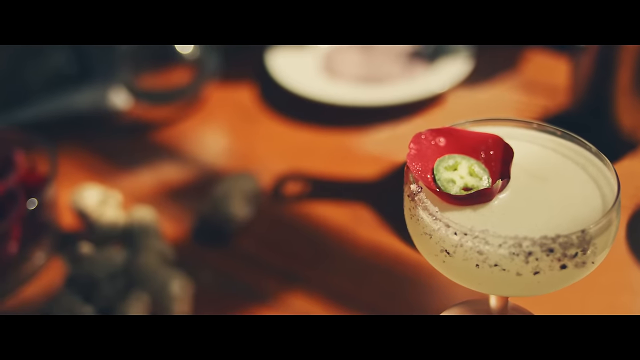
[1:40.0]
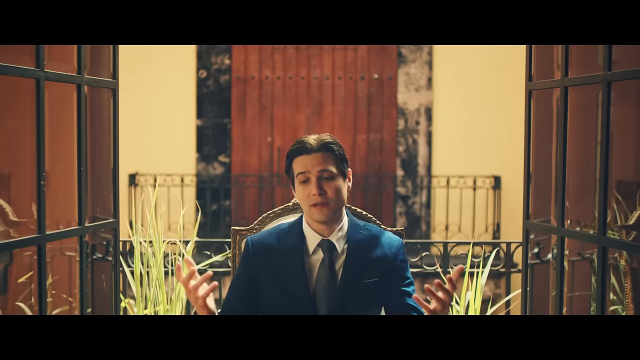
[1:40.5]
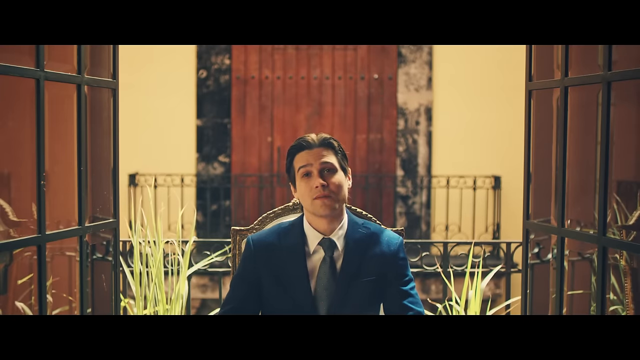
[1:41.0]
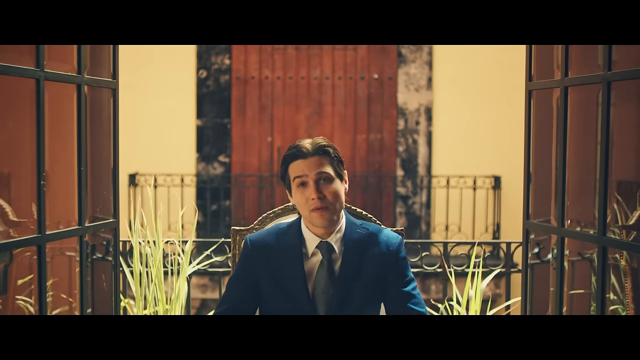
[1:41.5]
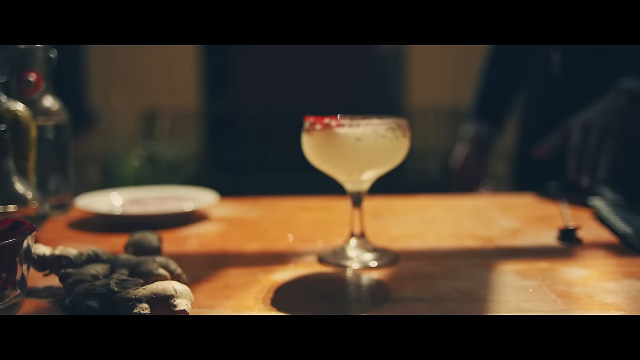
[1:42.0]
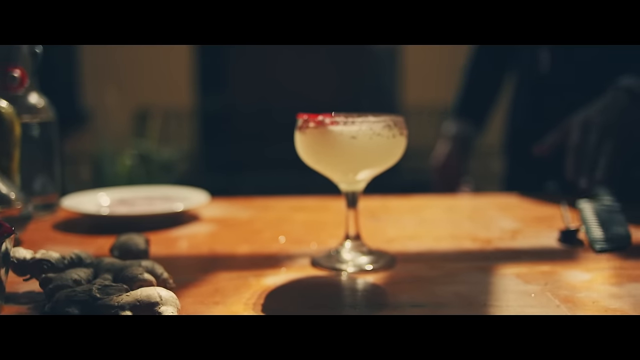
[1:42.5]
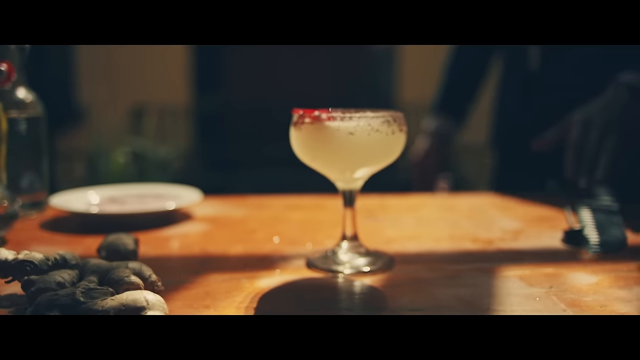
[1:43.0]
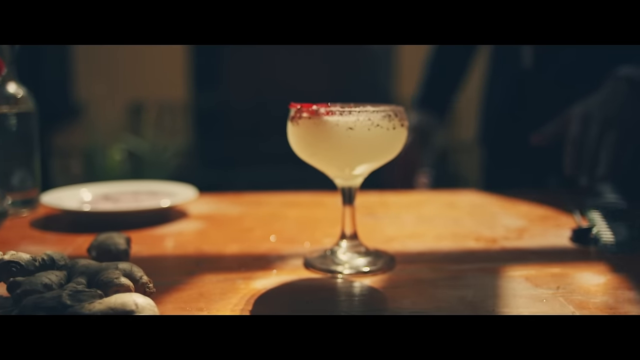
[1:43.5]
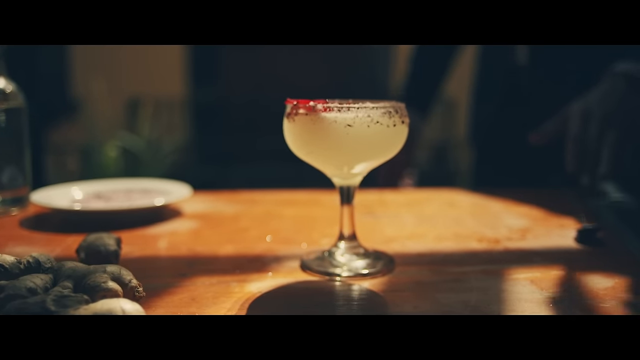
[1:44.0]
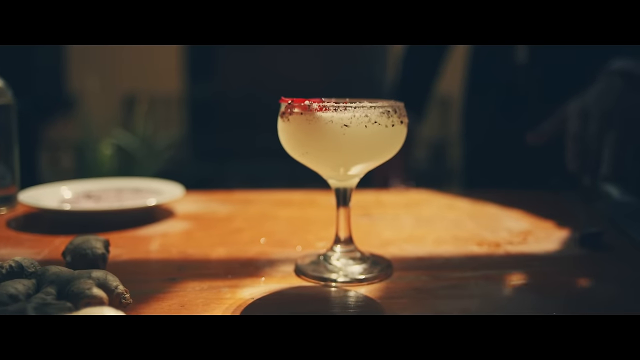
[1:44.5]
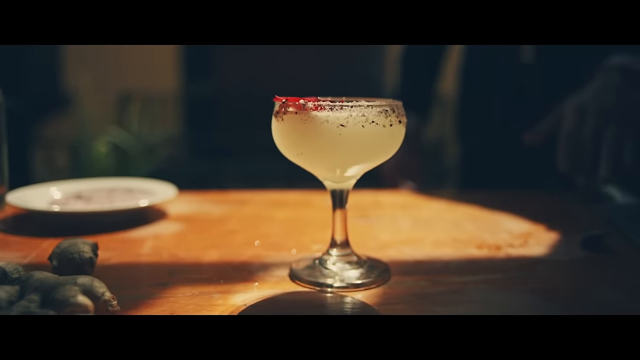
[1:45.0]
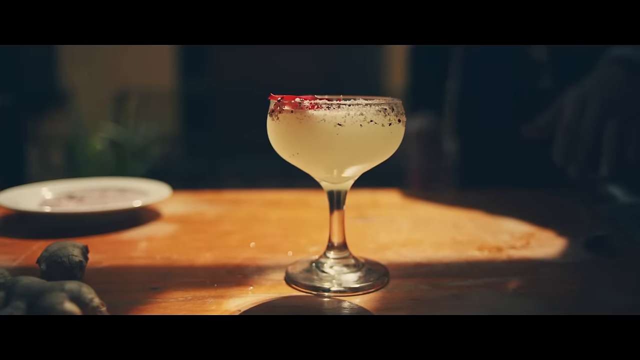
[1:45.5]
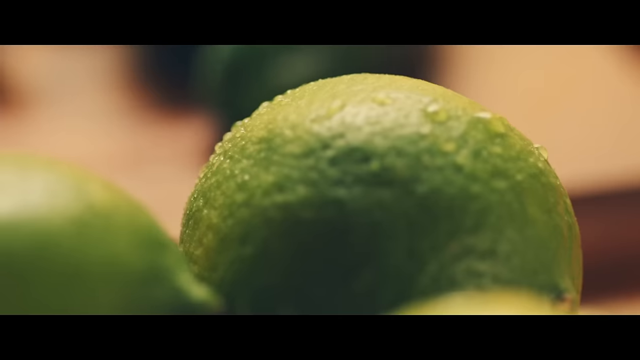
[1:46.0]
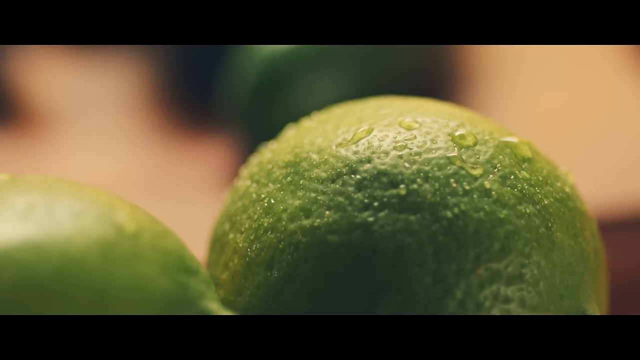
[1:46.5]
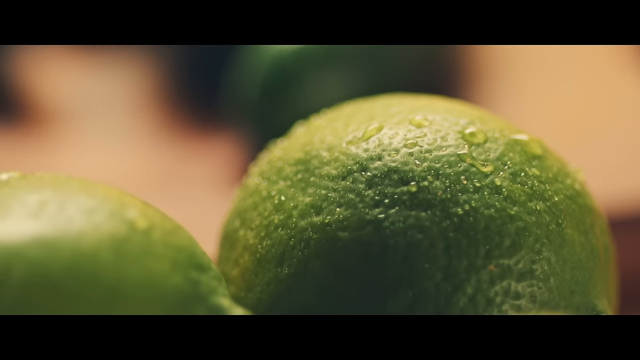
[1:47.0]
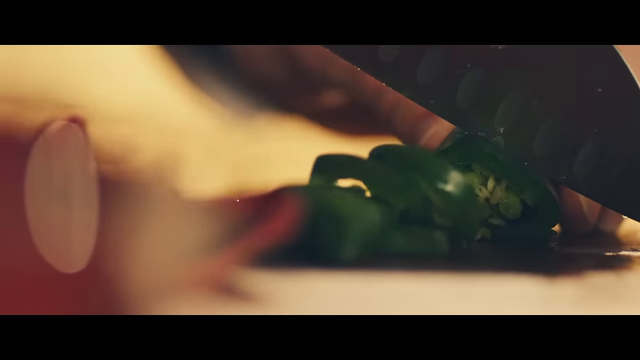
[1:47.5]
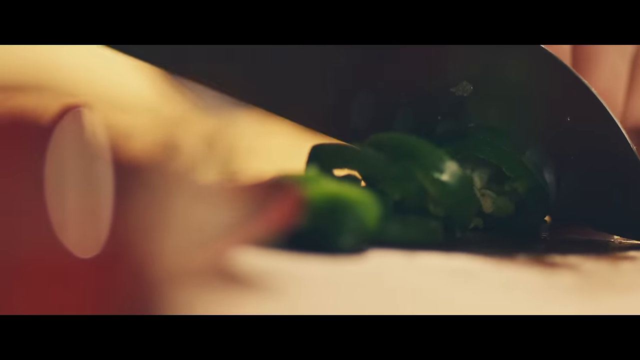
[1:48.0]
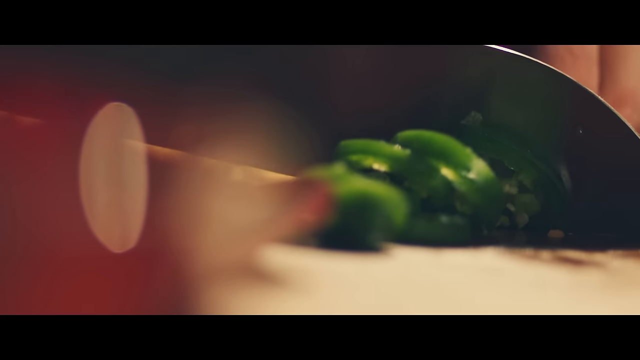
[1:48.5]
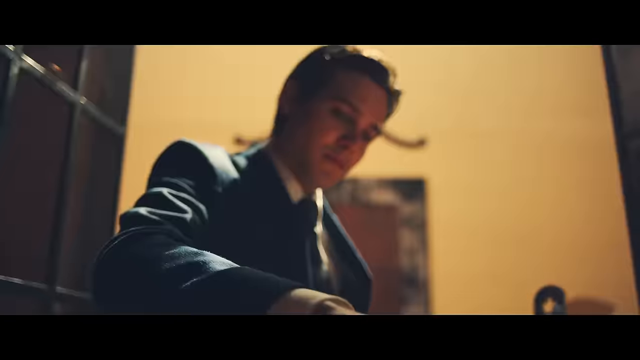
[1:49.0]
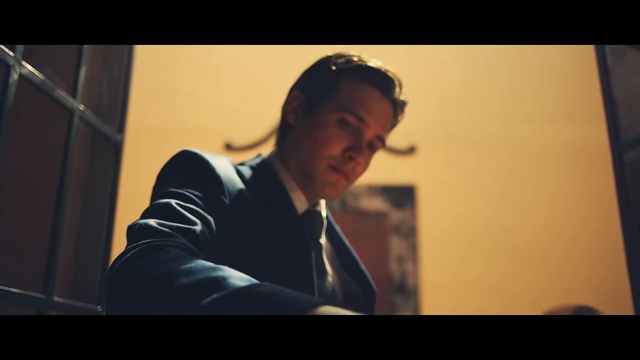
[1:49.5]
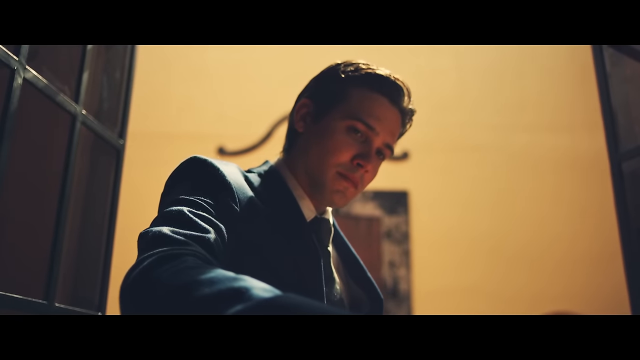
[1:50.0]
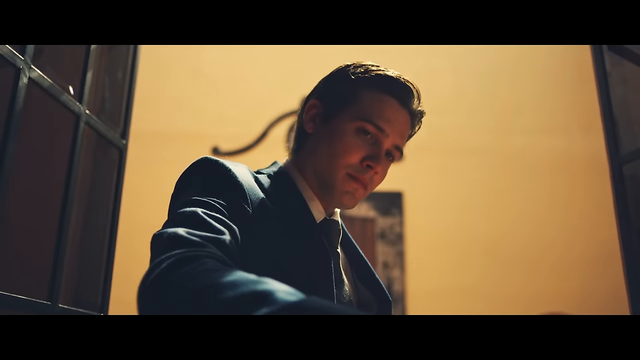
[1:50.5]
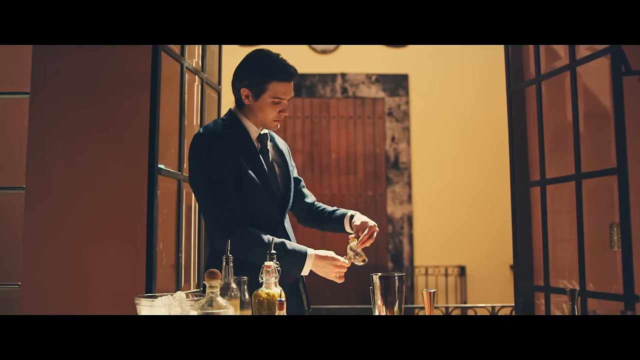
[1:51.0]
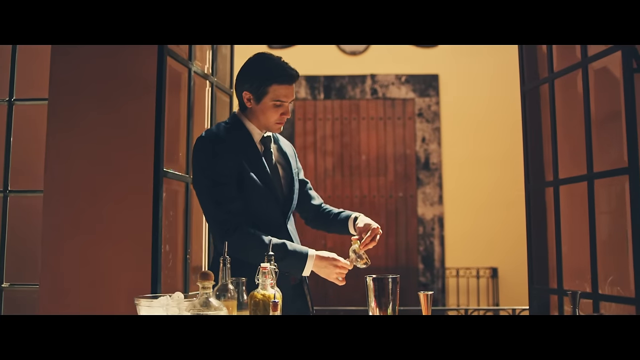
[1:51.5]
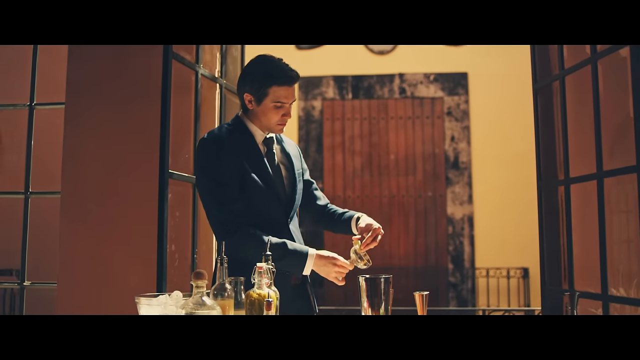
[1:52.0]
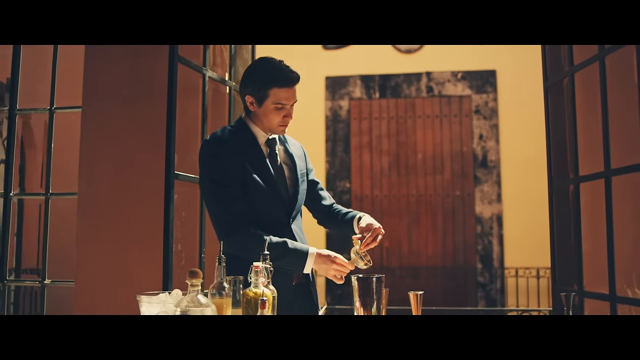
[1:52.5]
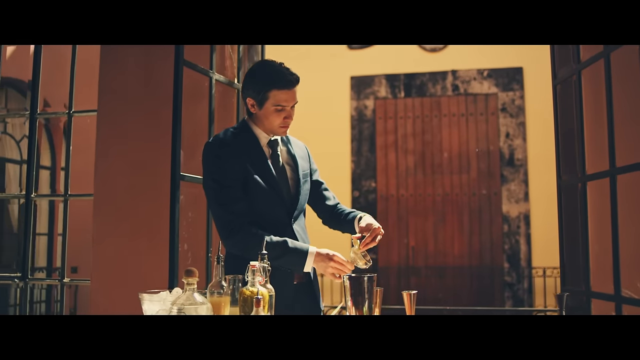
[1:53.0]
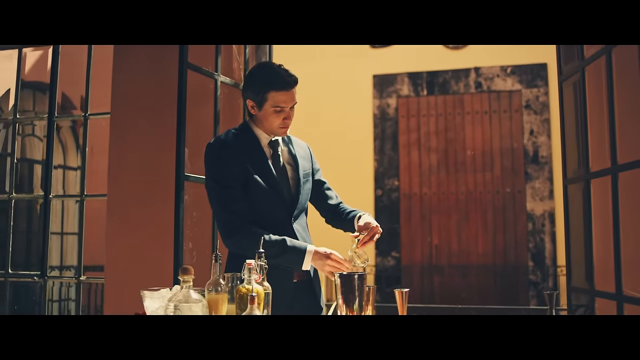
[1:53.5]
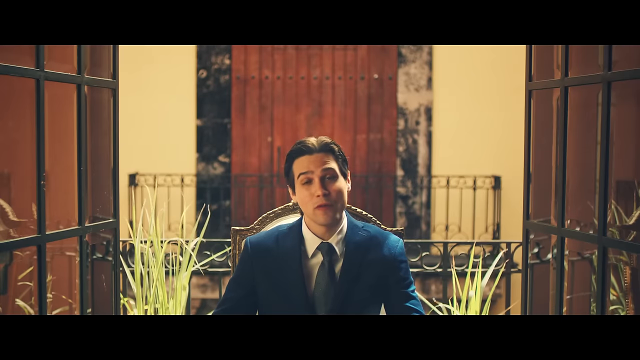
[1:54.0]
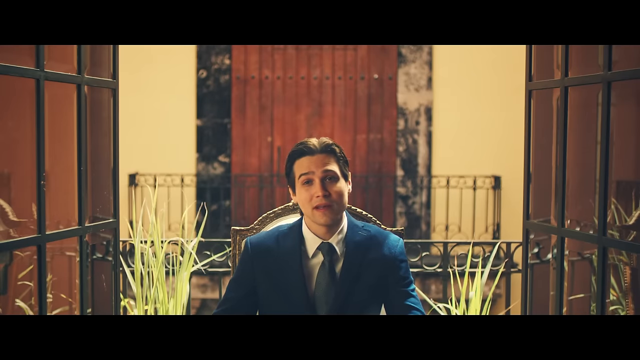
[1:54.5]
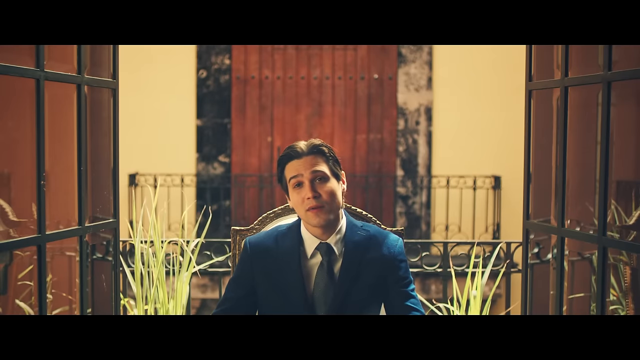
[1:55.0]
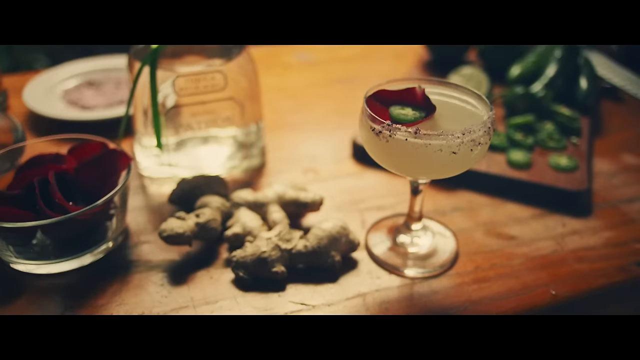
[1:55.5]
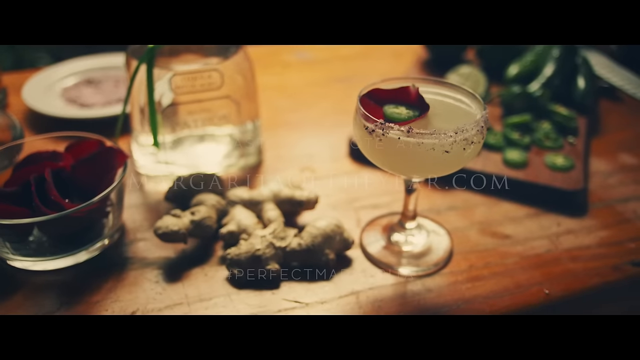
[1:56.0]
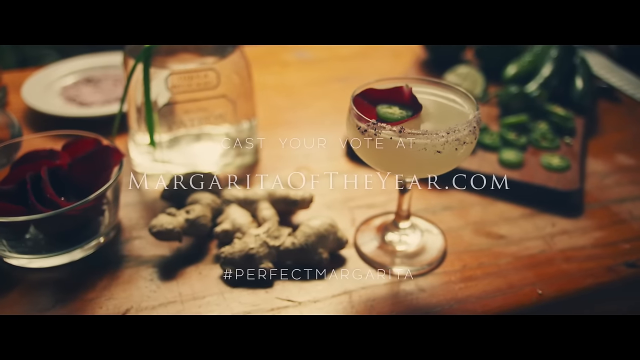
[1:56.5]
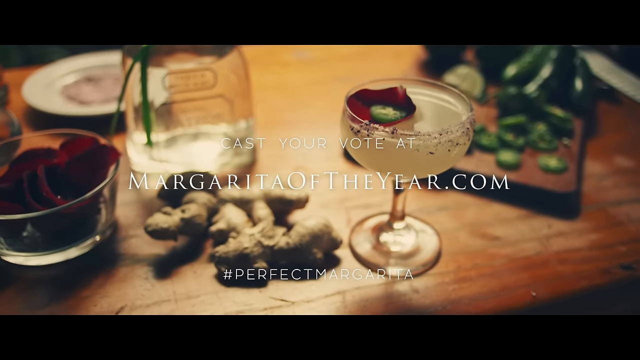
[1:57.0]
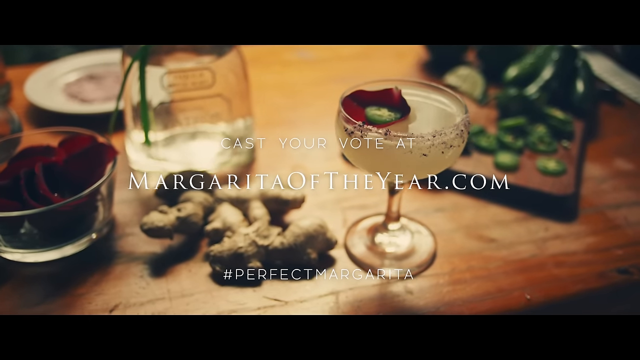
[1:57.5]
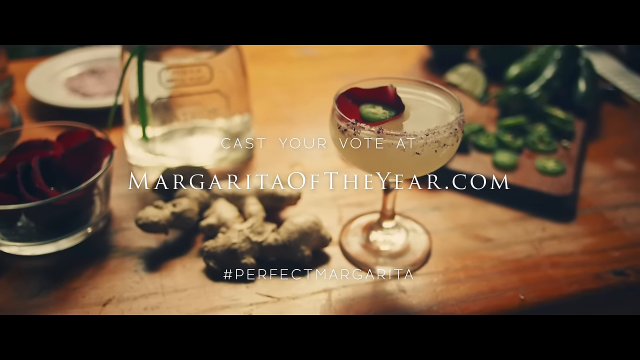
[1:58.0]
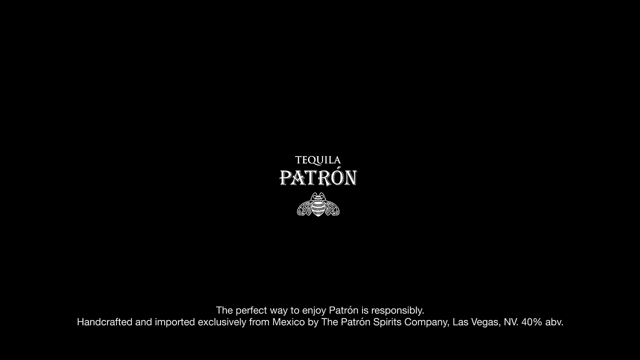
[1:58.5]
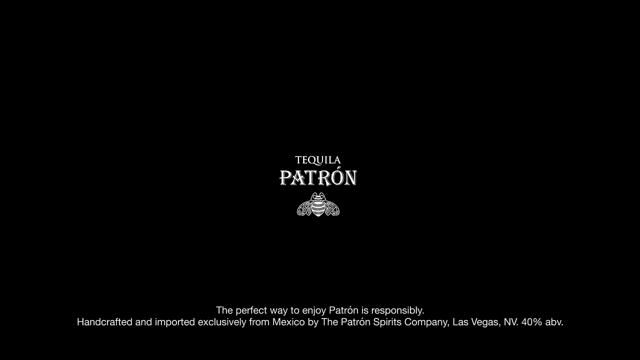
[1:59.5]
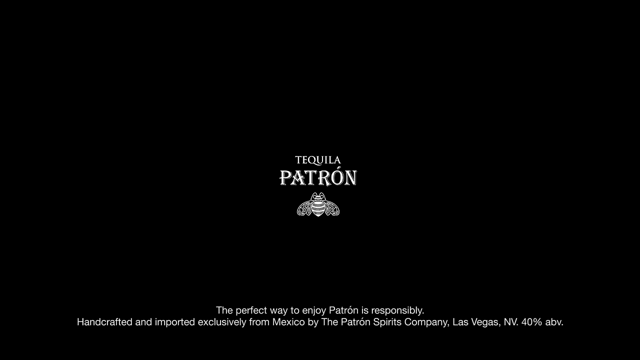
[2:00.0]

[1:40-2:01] The finished drink is in a martini-type glass, garnished with a rose petal. The drink is made with tequila, Patron, and lime; it is probably a margarita, possibly a spicy margarita with the peppers.